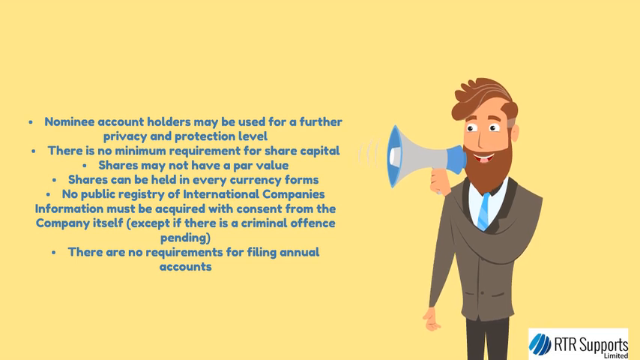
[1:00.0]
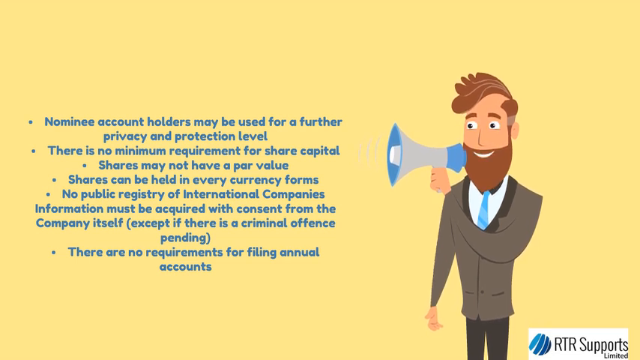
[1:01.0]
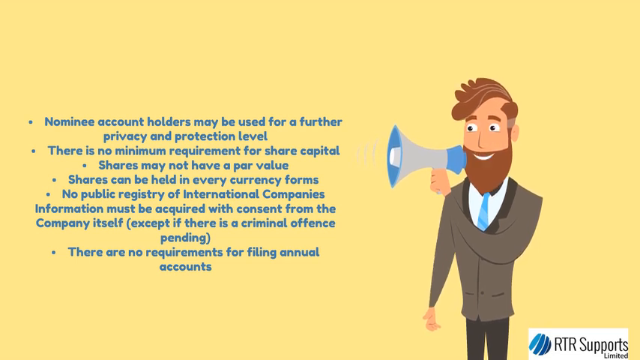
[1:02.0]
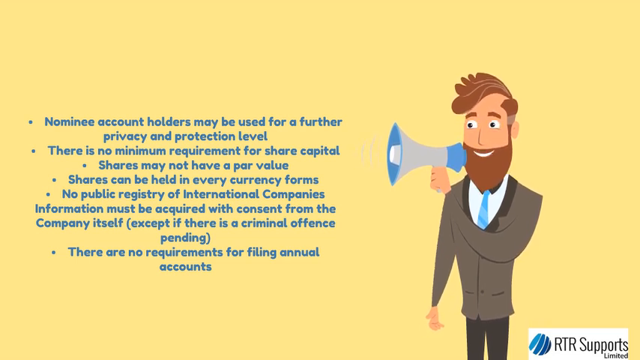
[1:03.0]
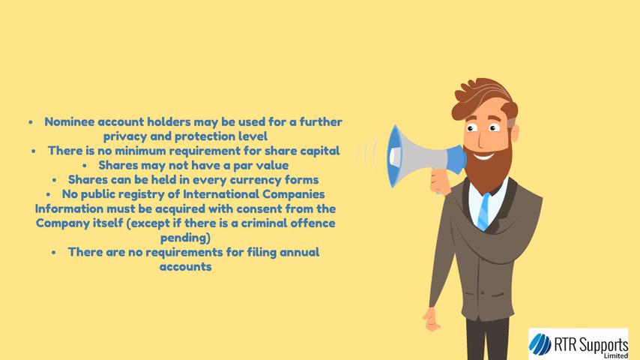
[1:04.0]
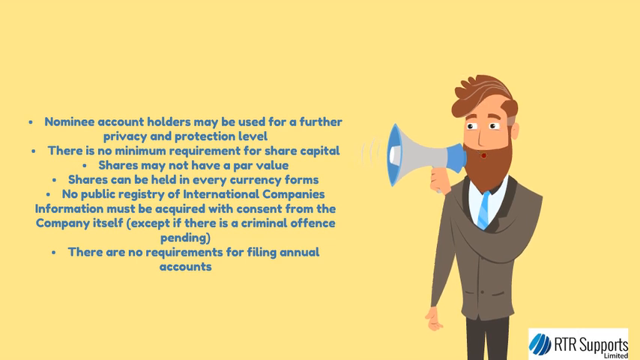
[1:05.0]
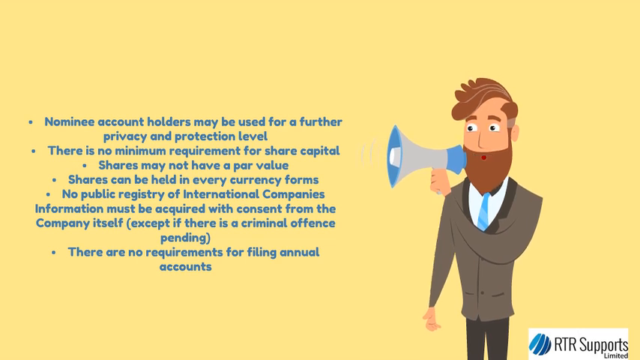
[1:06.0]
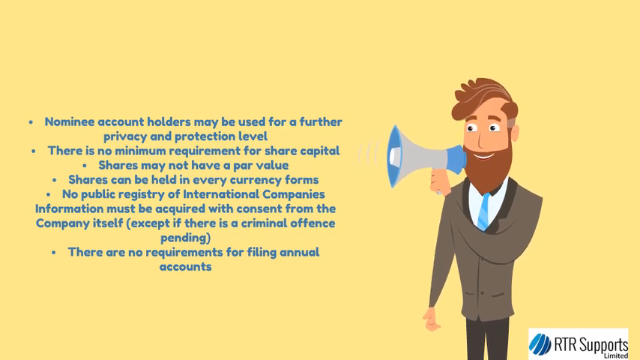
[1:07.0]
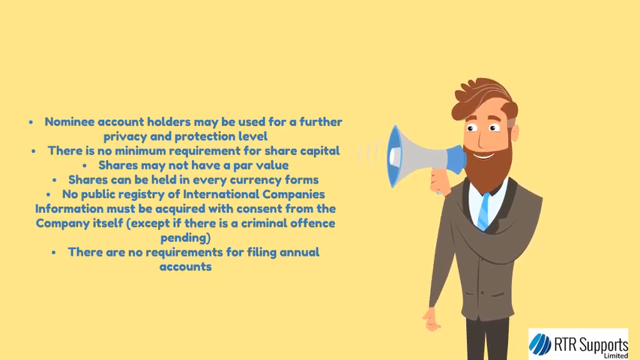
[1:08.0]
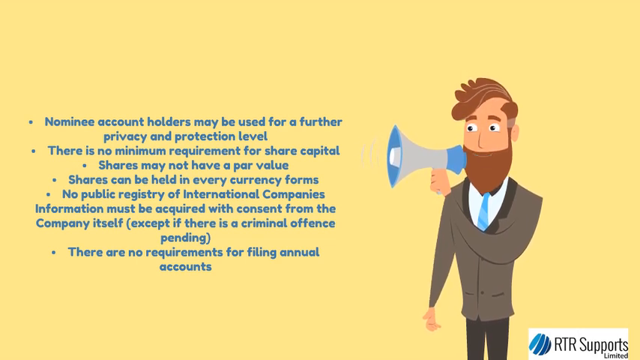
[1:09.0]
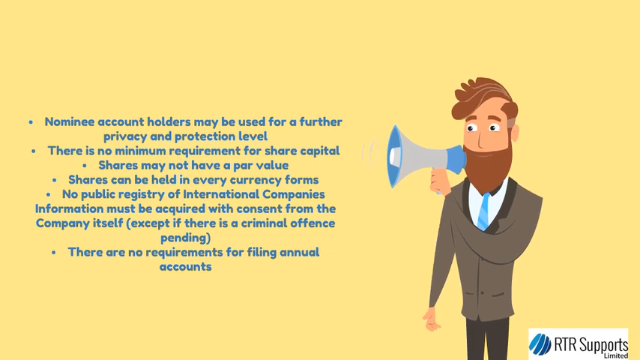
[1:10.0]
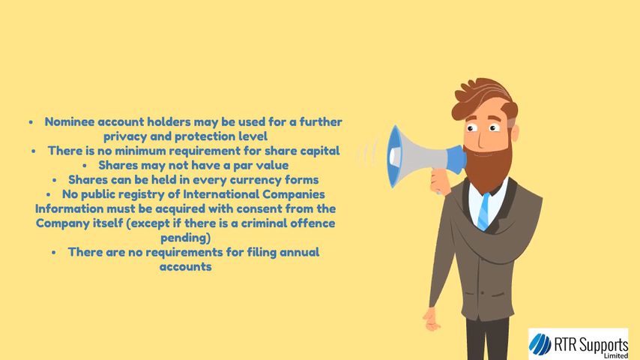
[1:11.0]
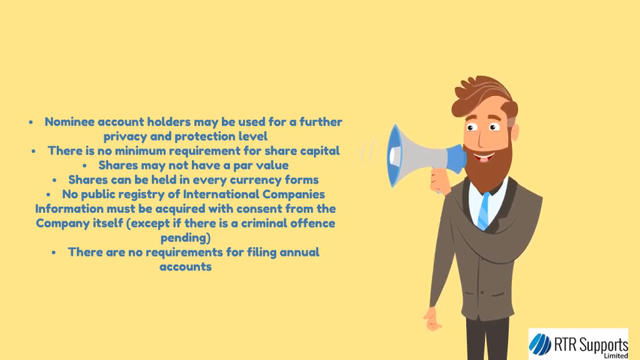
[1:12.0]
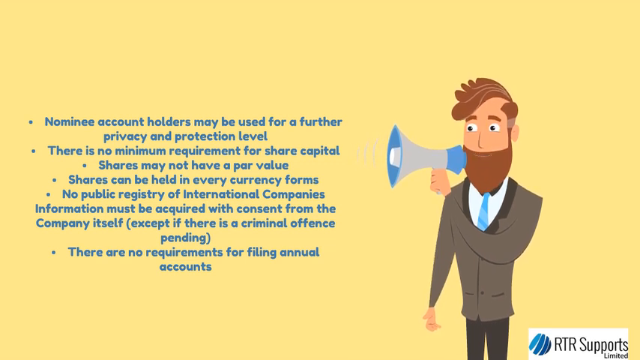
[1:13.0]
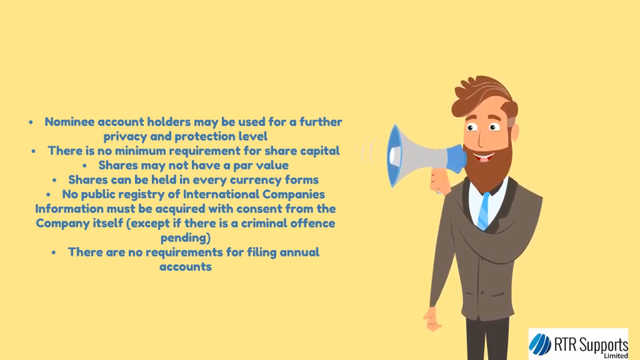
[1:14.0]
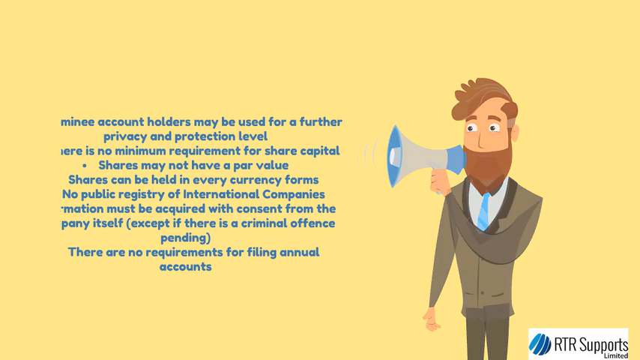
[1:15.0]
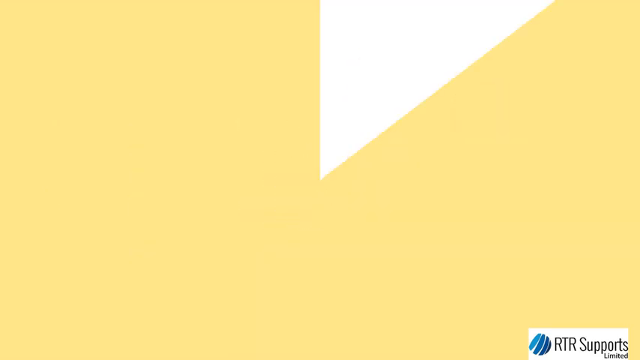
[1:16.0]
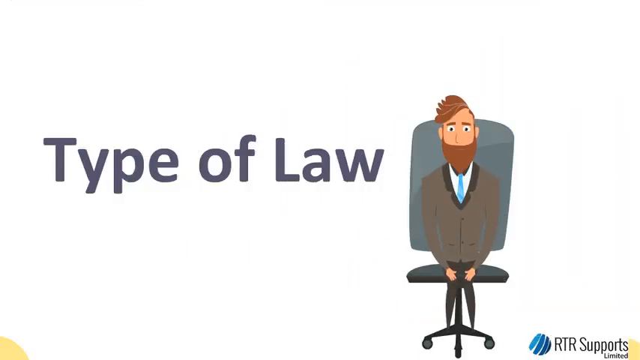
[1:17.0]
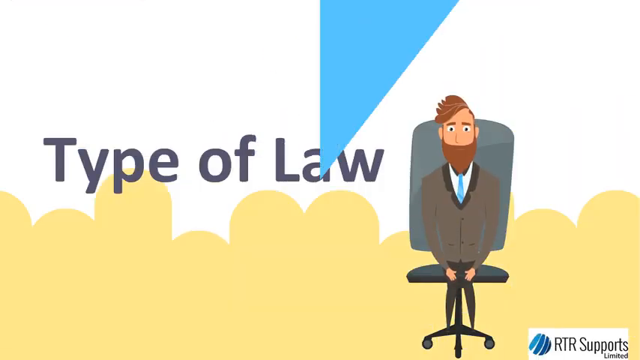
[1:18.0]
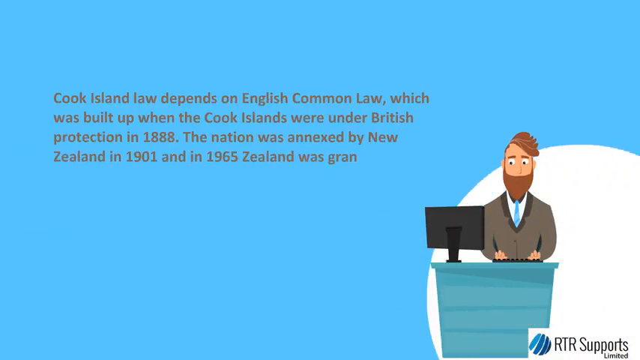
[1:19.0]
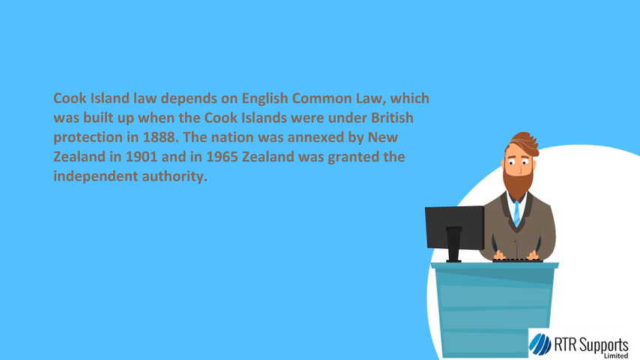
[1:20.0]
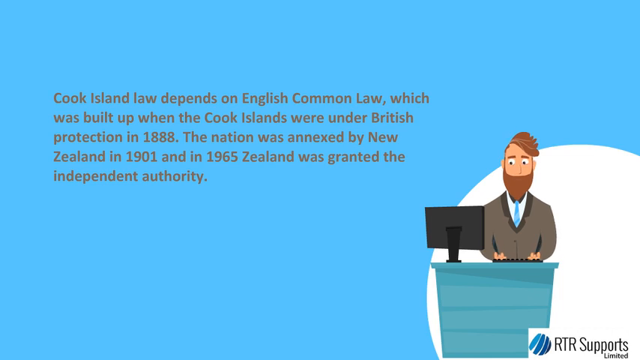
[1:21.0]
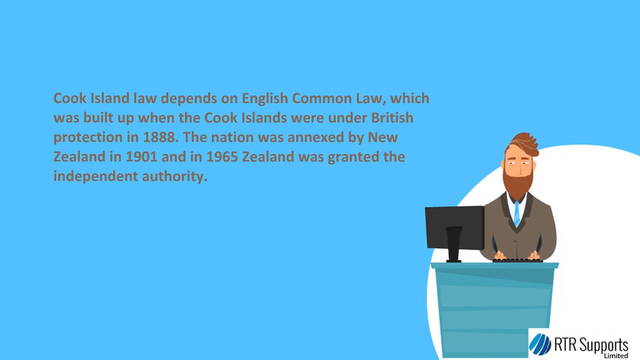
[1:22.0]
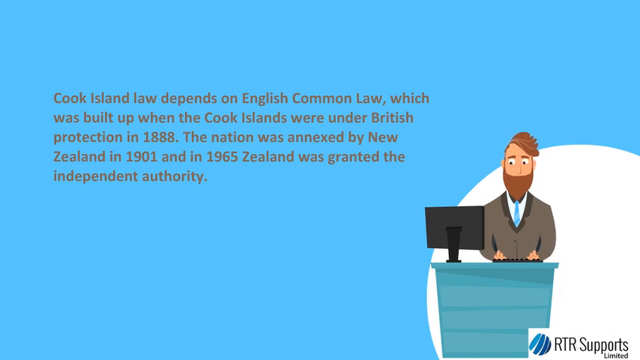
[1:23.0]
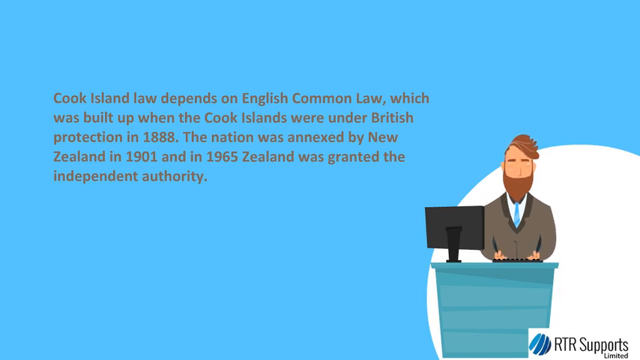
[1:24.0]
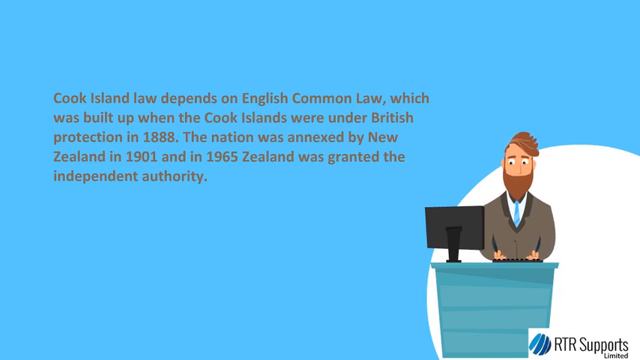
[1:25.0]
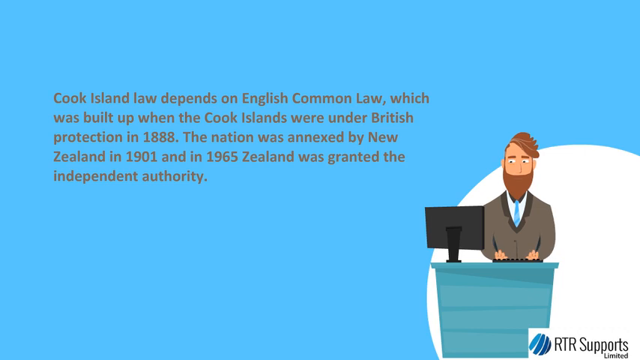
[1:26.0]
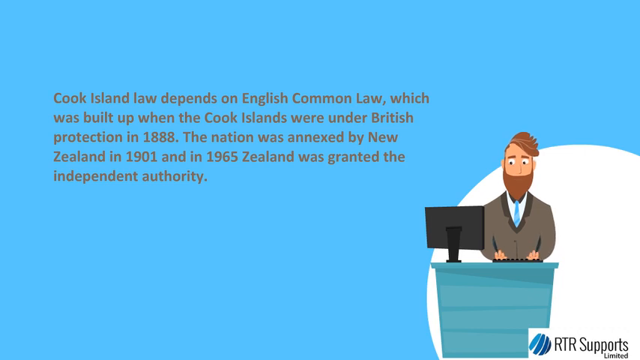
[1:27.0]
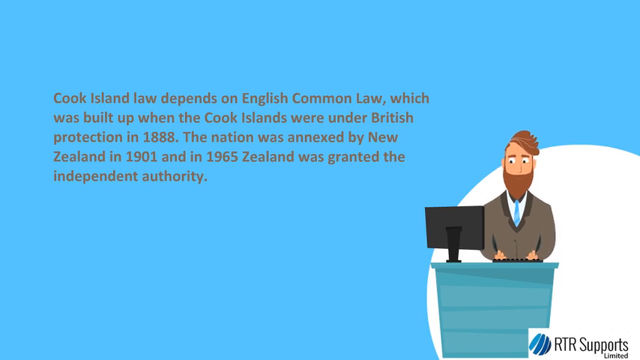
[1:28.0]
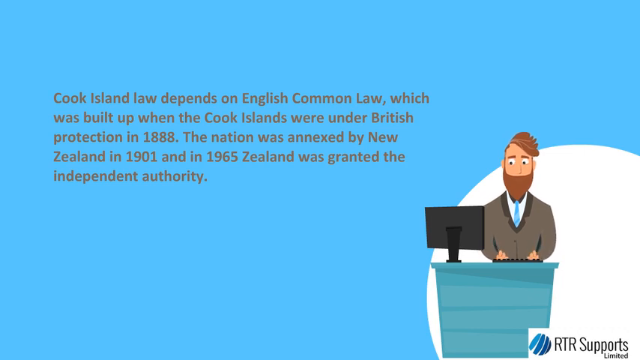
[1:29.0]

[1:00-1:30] The presentation moves on to the type of law: Cook Islands law is based on English common law, built up when the Cook Islands were under British protection in 1888; the islands were annexed by New Zealand in 1901, and independence came in 1965. Crispin stands behind his desk, pressing on his keyboard and typing.